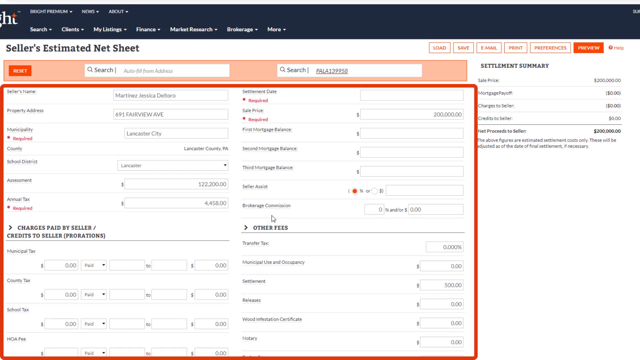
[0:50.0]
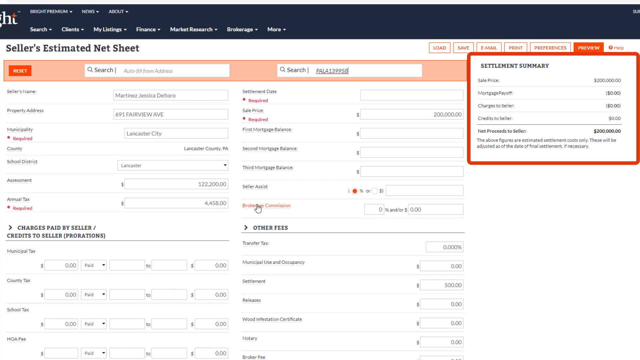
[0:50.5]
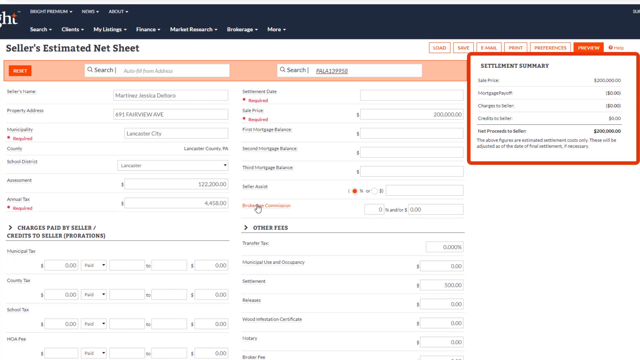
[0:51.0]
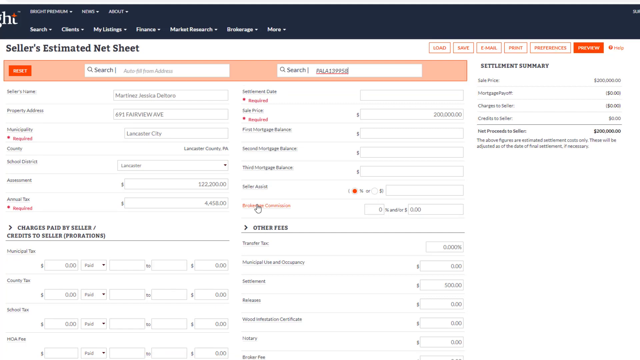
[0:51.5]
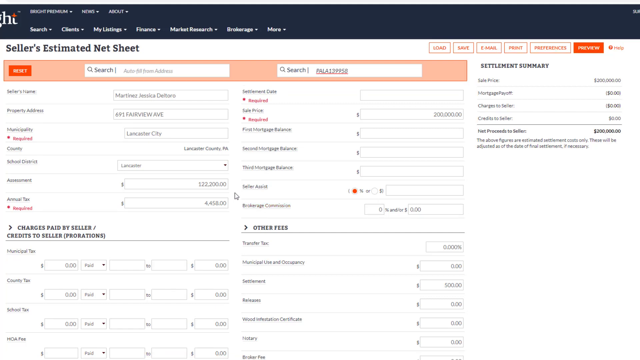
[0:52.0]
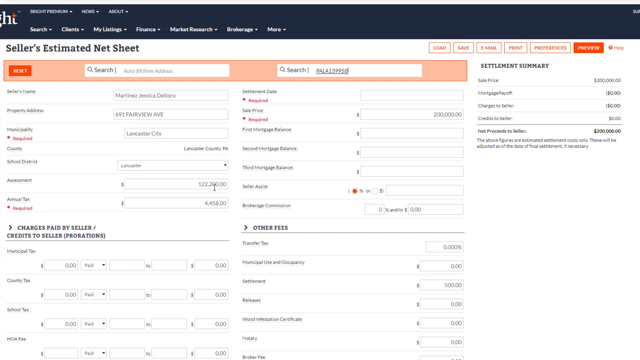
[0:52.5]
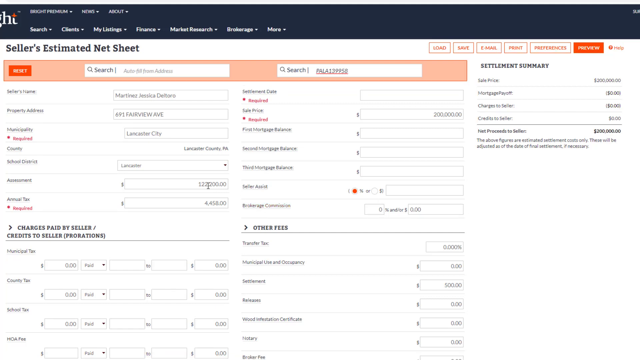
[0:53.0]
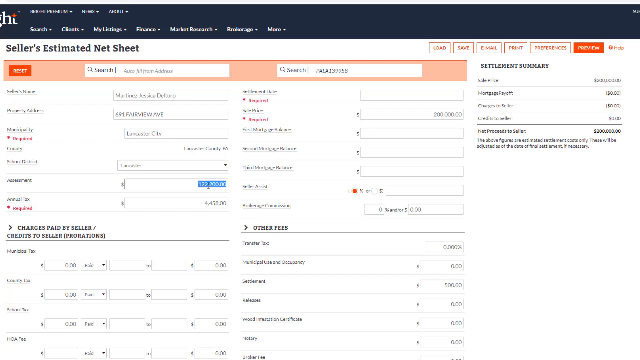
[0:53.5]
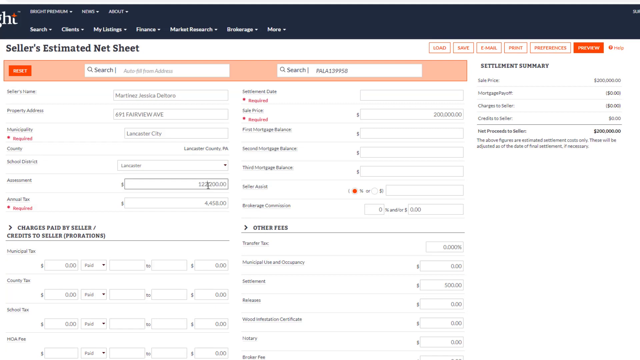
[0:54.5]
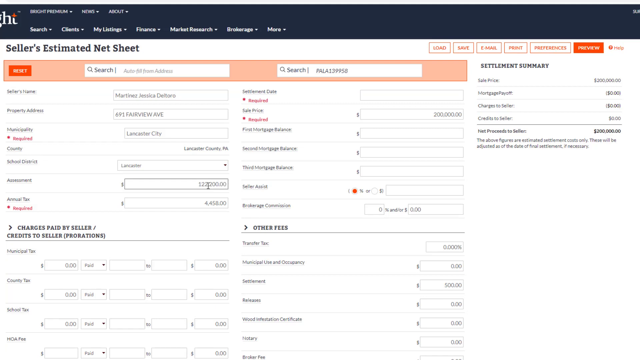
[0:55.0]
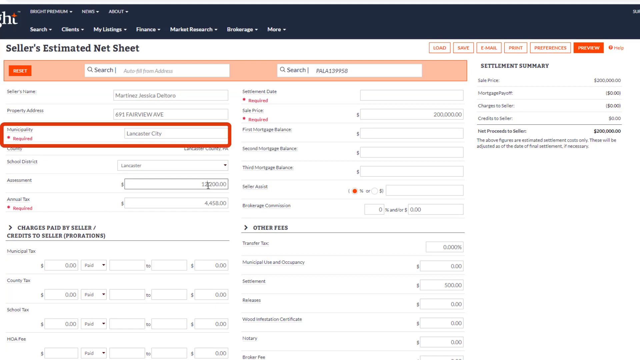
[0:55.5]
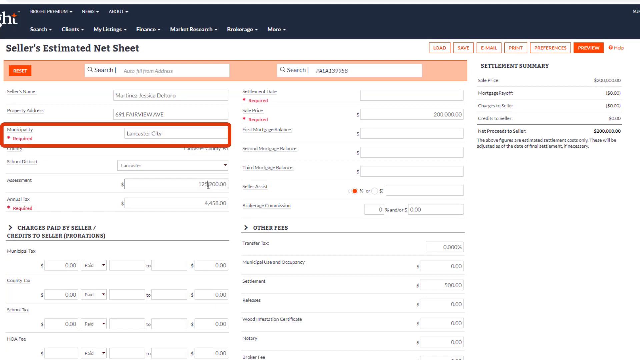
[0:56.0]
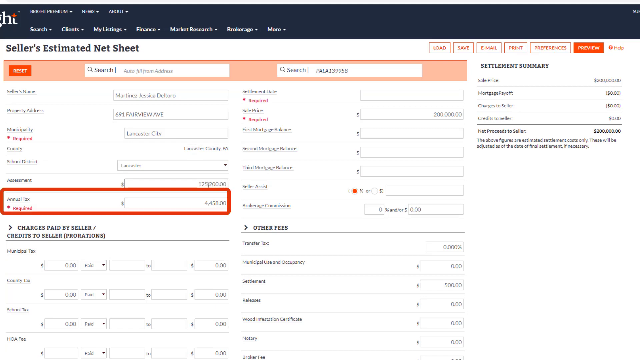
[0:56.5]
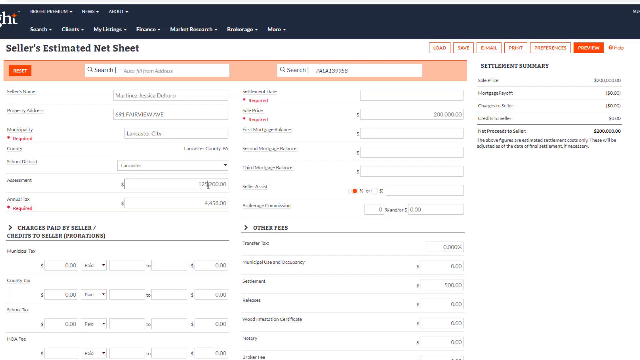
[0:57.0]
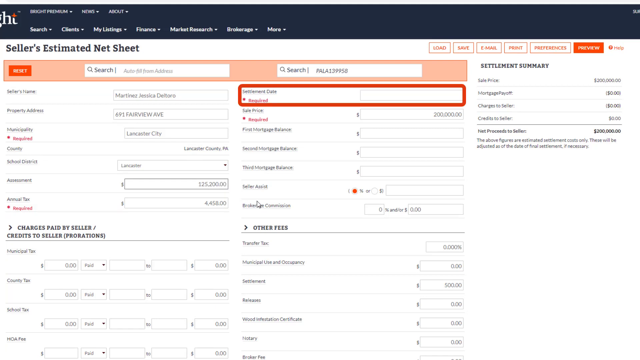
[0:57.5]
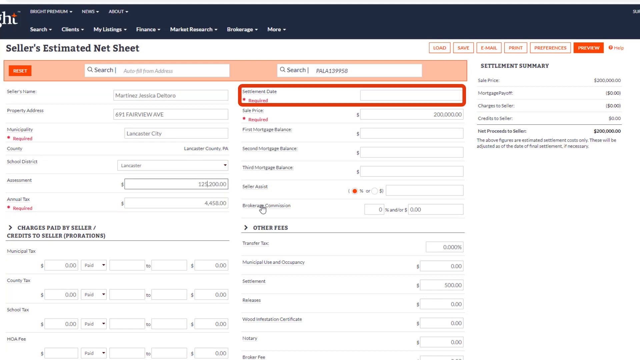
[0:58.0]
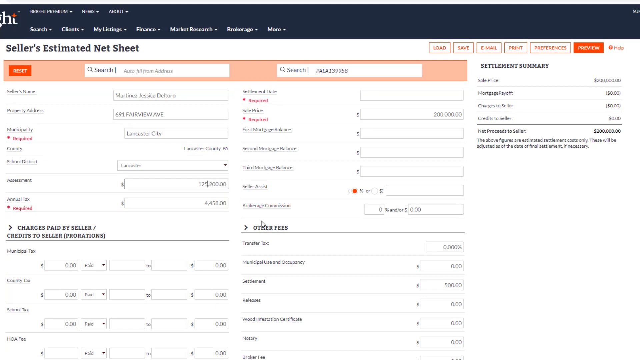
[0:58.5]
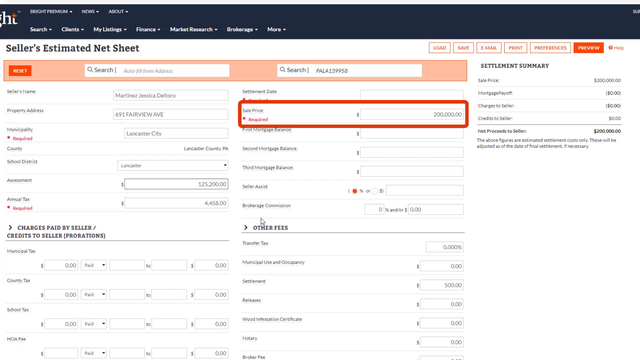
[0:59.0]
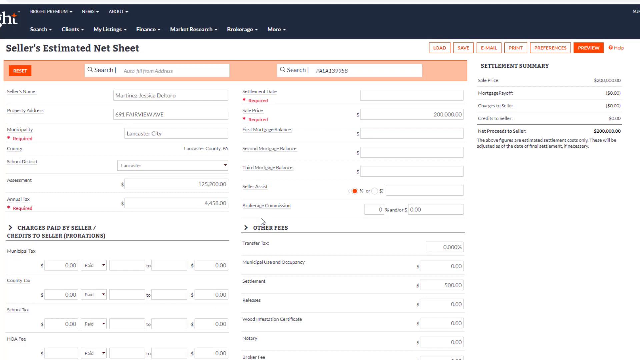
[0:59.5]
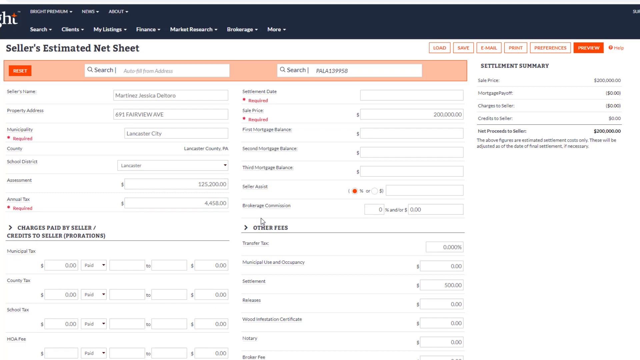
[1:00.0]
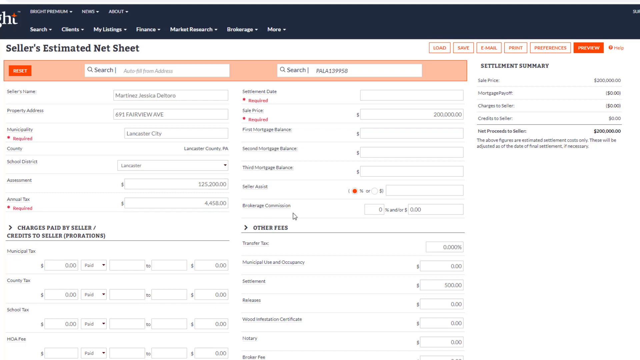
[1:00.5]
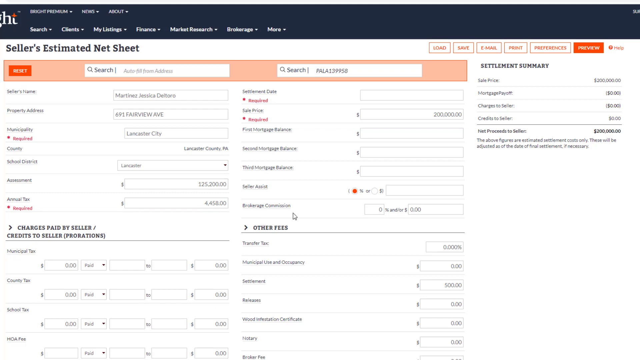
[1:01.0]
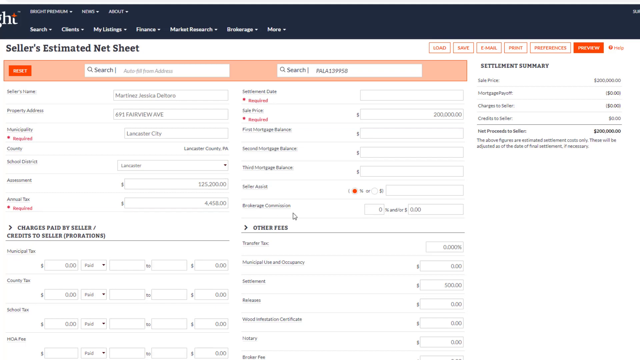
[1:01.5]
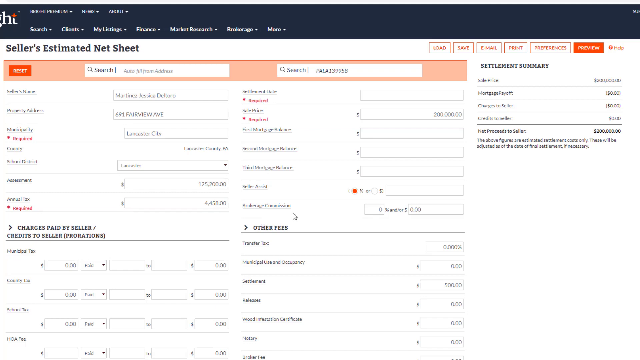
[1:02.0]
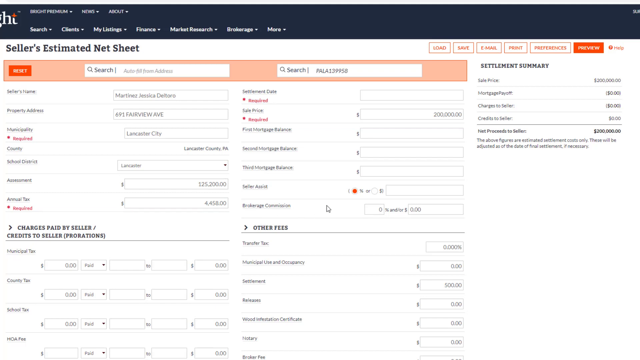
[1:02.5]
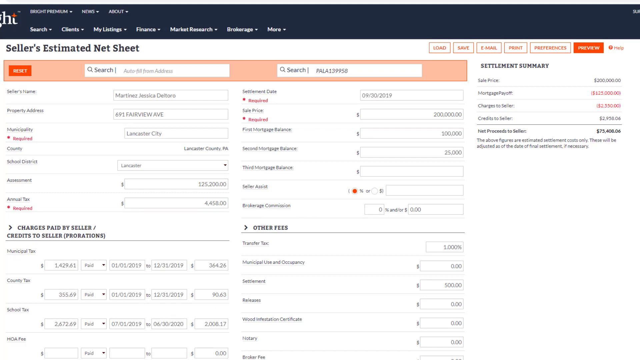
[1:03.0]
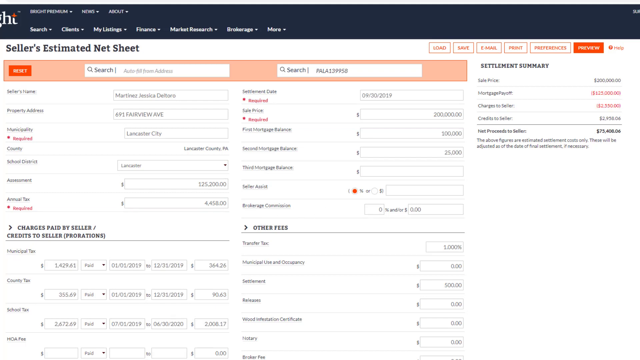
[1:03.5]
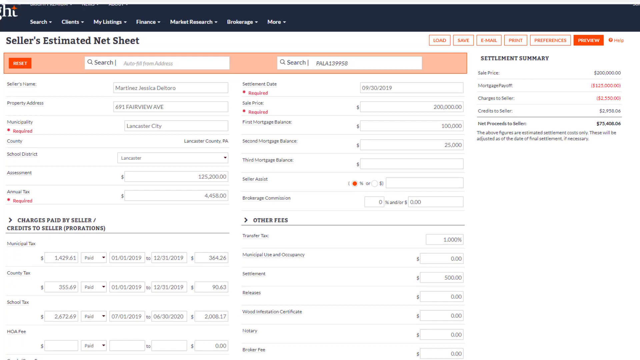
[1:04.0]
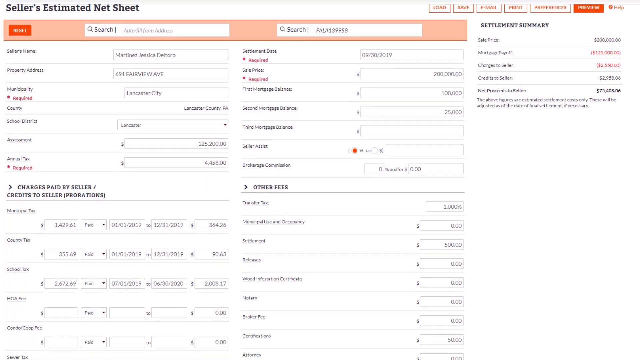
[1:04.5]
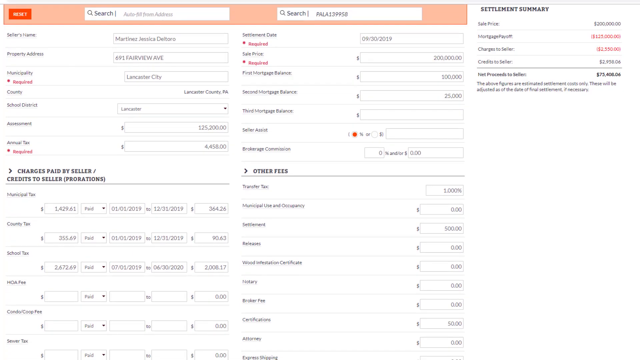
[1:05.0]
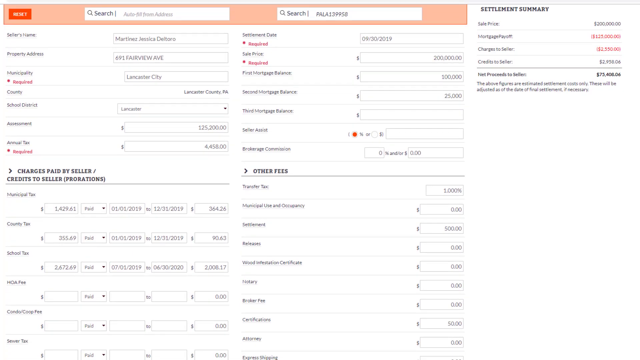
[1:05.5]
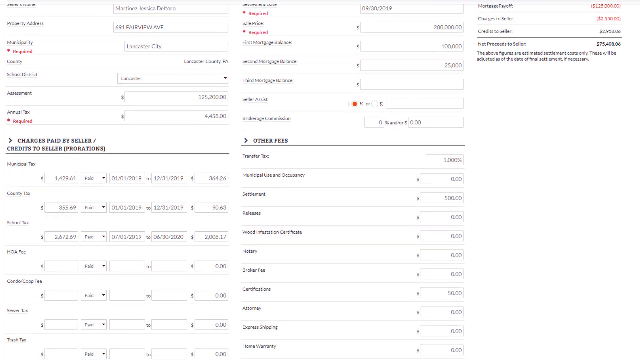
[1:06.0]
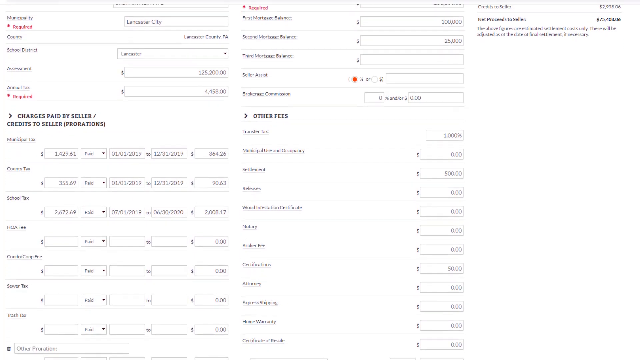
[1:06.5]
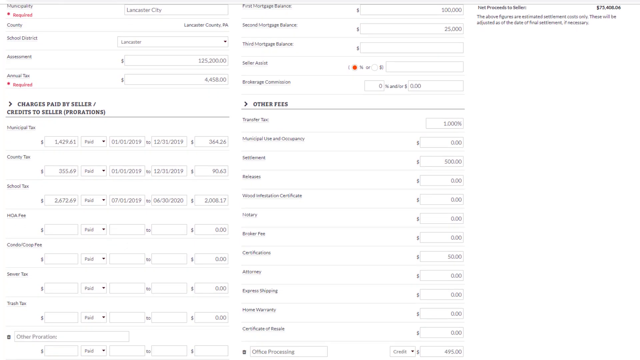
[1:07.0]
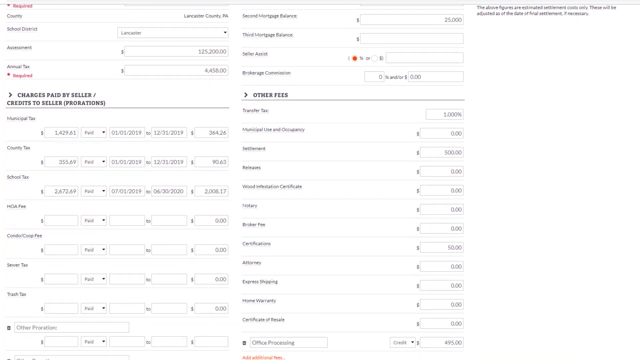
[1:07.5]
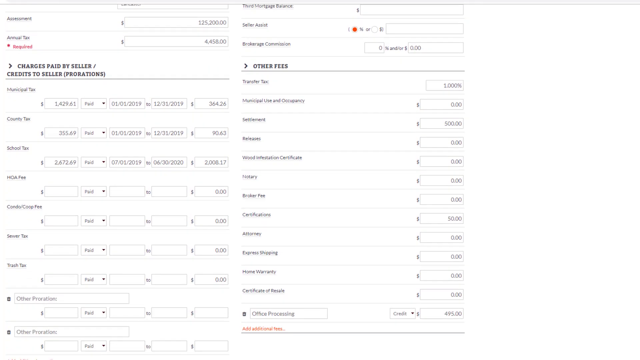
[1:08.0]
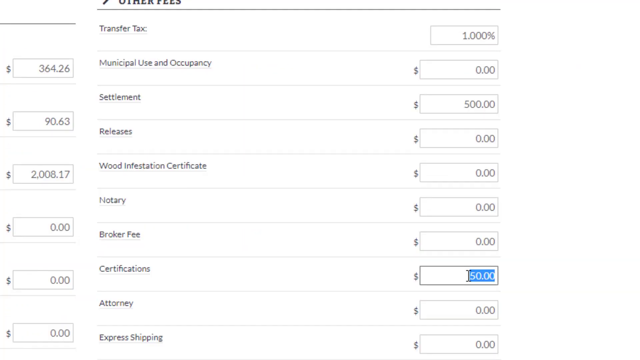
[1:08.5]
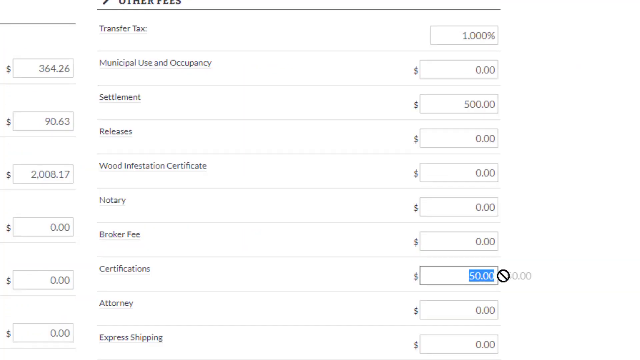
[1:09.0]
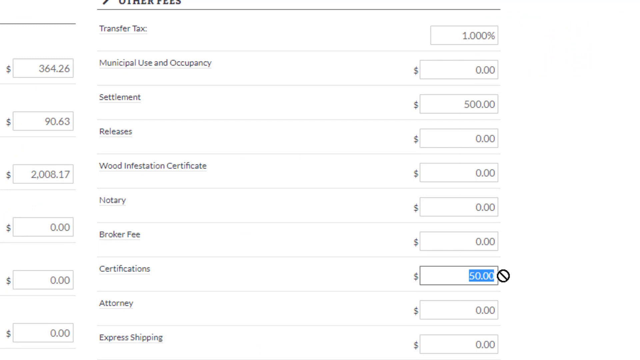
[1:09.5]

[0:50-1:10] A screenshot of the seller's estimated net sheet document shows a red outline rectangle around the four main sections of the document. Another red rectangle then outlines the right-hand side of the document, titled "Settlement Summary." The mouse is used to highlight and change numbers in one part of the document while another entry part is highlighted in red. The red rectangle flashes to yet another section of the sheet, and this occurs repeatedly. Eventually the user scrolls down the sheet to reveal additional sections and entry boxes. The video then cuts to a zoomed-in look at one set of entry boxes, where the user has already highlighted a number to begin replacing it. The titles of some of the entry boxes are readable here: the section is titled "Other Fees," with entry boxes for "Transfer Tax," "Municipal Use and Occupancy," "Settlement," "Releases," "Wood Infestation Certificate," "Notary," "Broker Fee," "Certifications," and "Attorney." The highlighted box is Certifications, currently filled with the number 150. The only other filled boxes are transfer tax, at 1.000 percent, and settlement, at $500 and 0 cents.